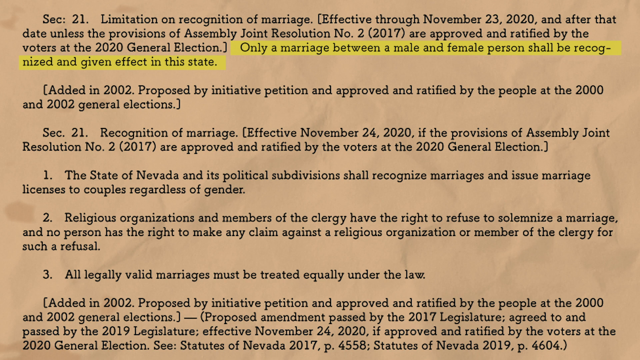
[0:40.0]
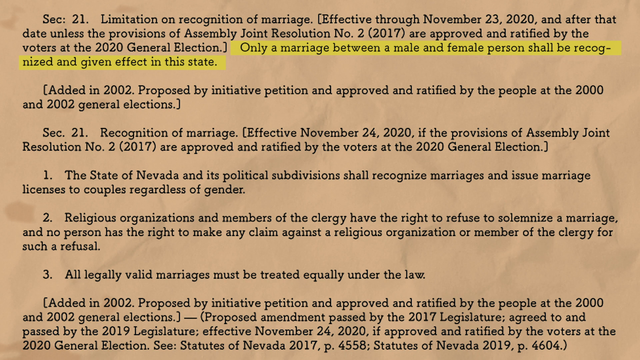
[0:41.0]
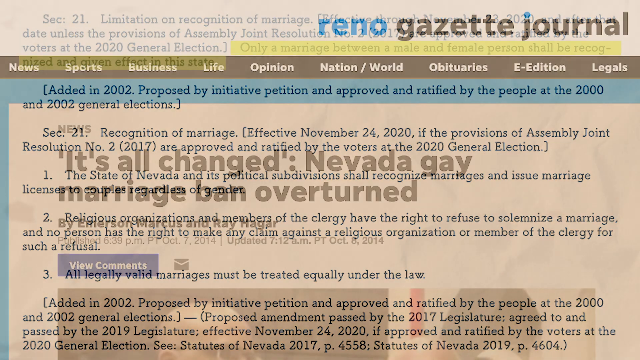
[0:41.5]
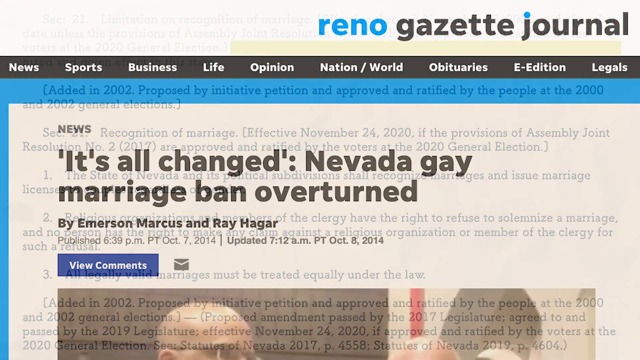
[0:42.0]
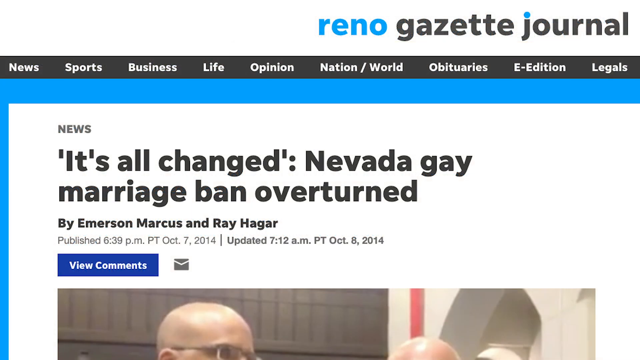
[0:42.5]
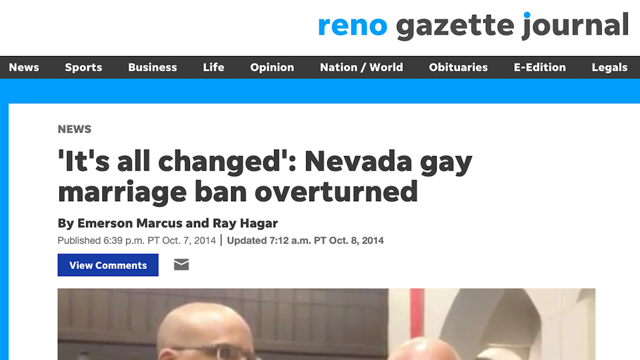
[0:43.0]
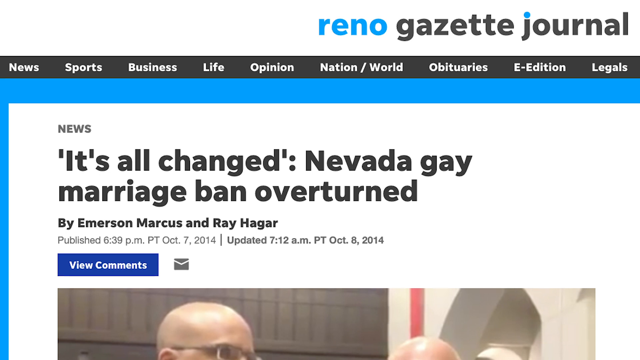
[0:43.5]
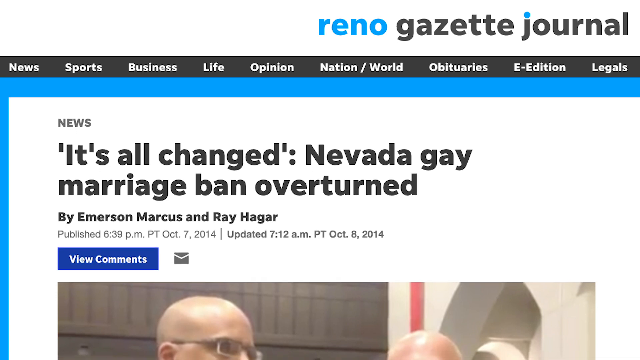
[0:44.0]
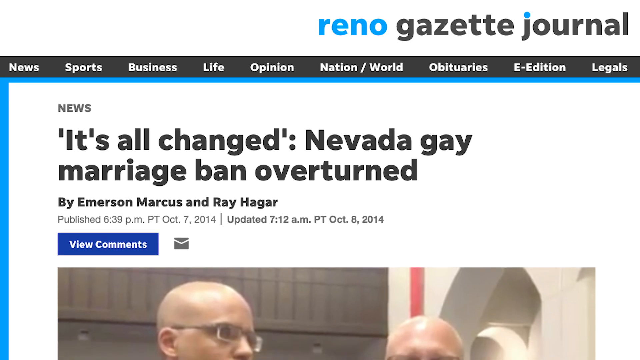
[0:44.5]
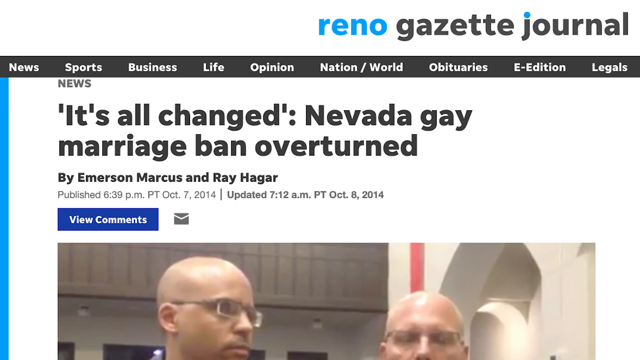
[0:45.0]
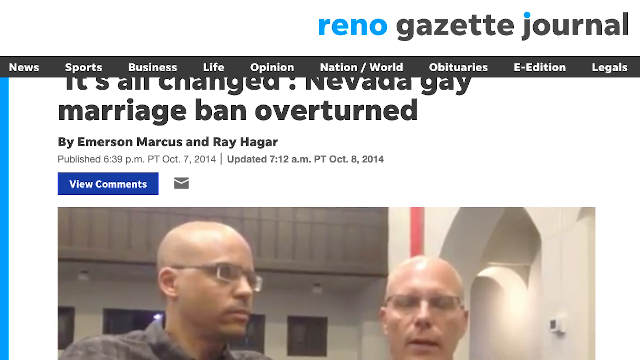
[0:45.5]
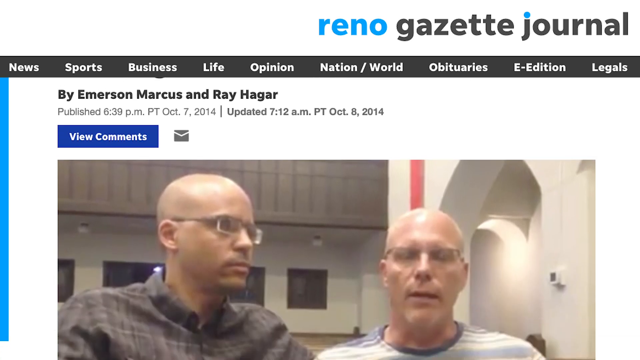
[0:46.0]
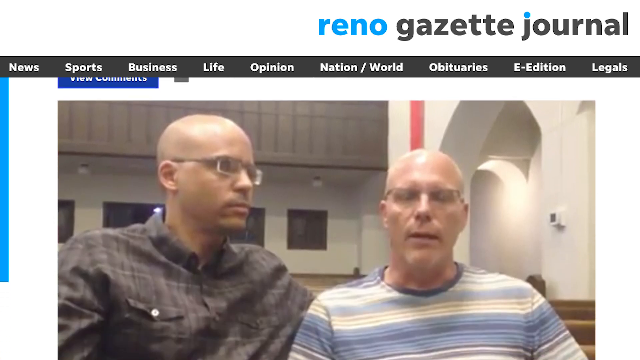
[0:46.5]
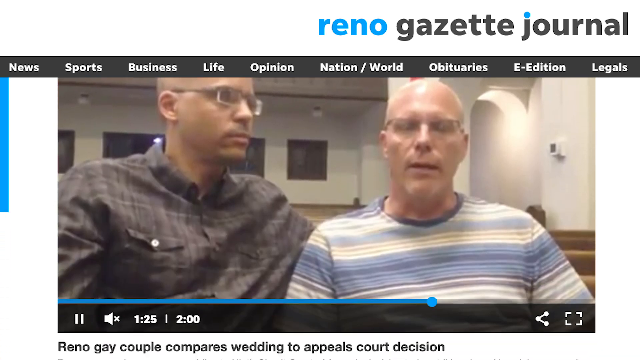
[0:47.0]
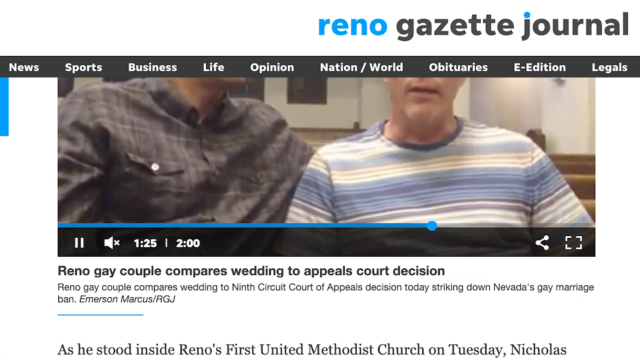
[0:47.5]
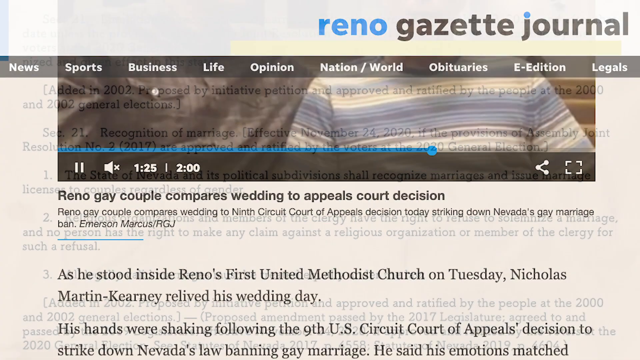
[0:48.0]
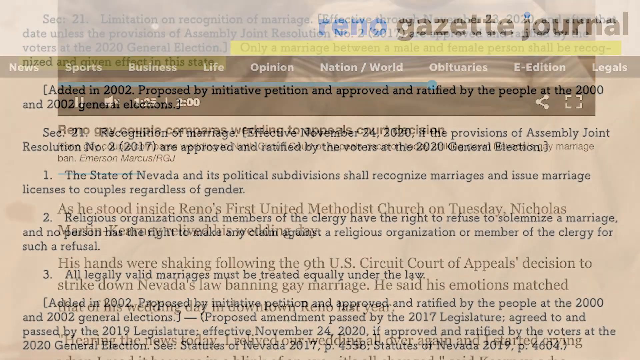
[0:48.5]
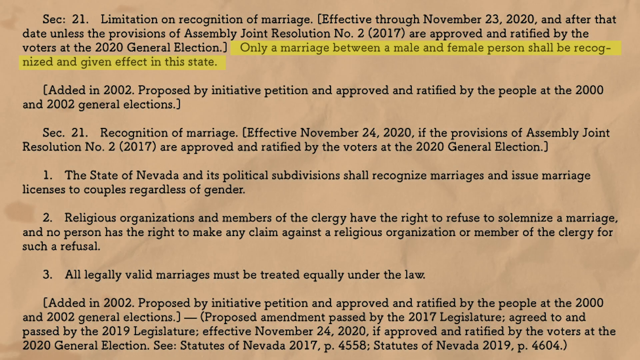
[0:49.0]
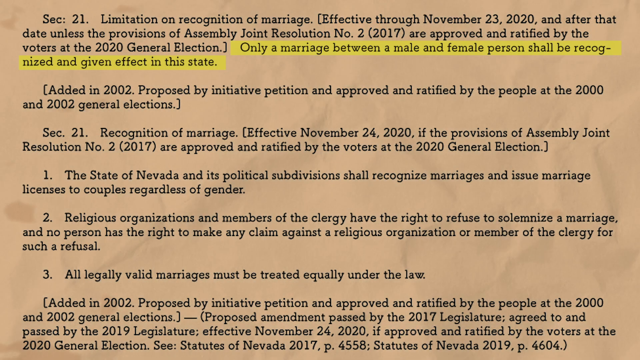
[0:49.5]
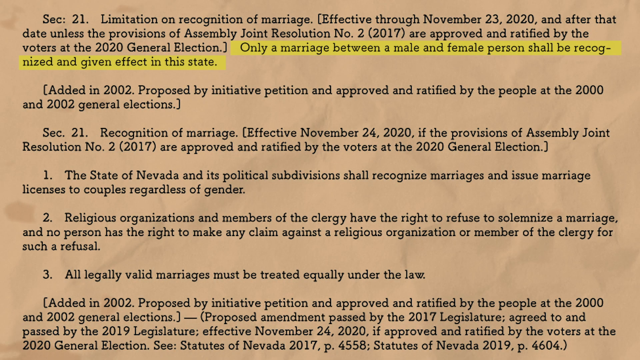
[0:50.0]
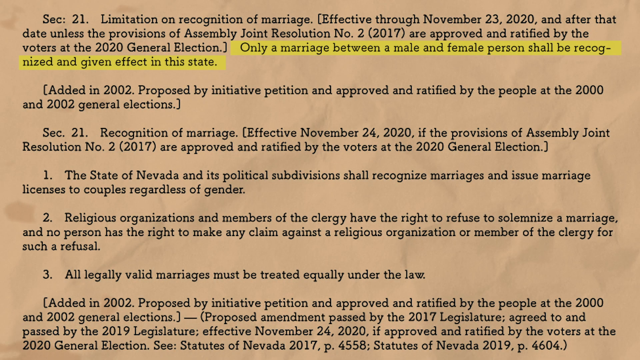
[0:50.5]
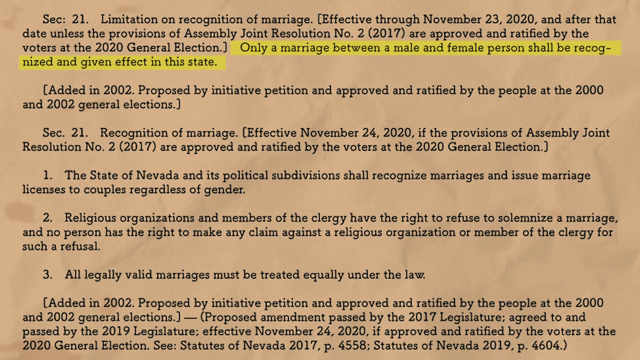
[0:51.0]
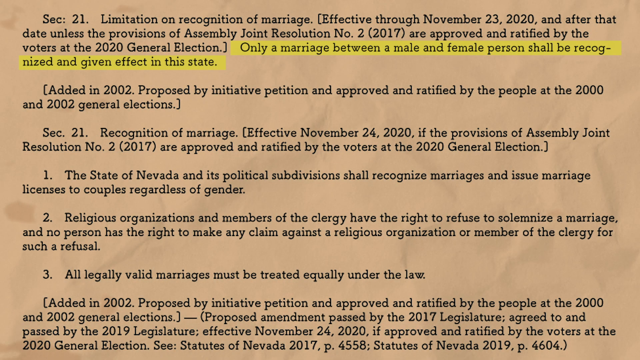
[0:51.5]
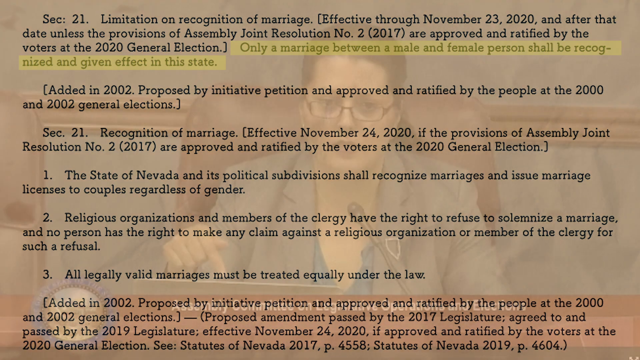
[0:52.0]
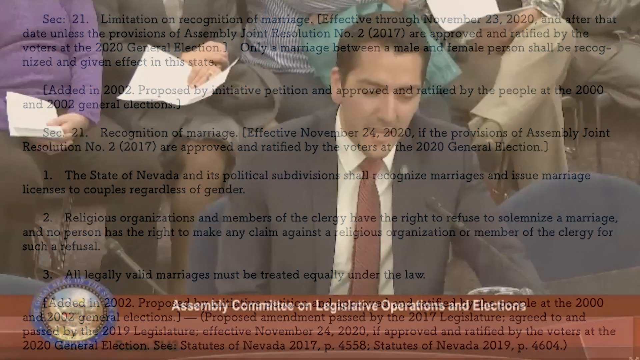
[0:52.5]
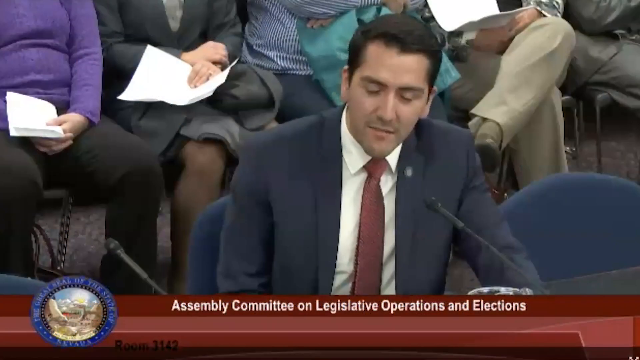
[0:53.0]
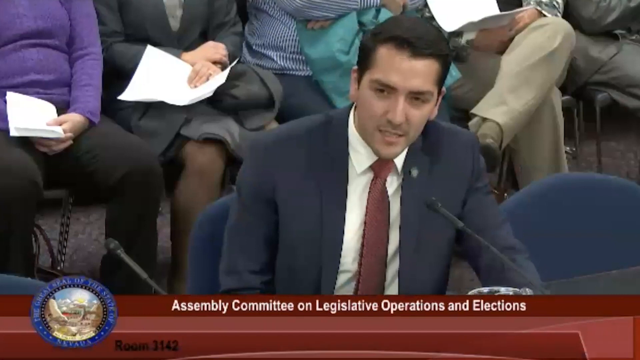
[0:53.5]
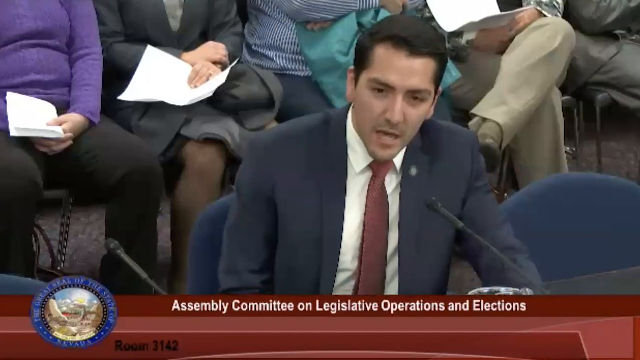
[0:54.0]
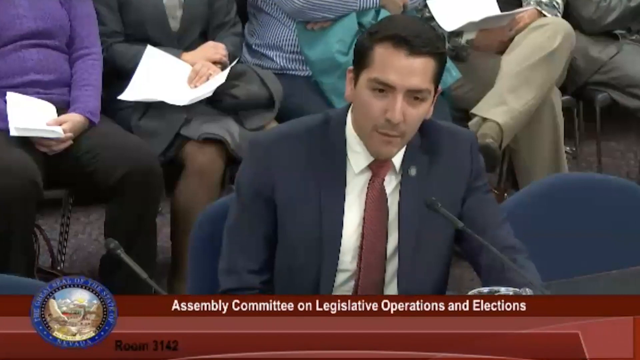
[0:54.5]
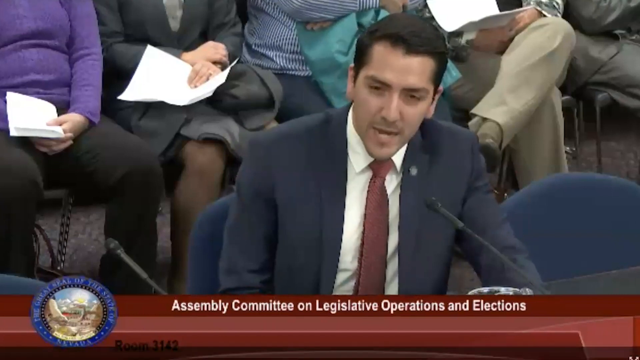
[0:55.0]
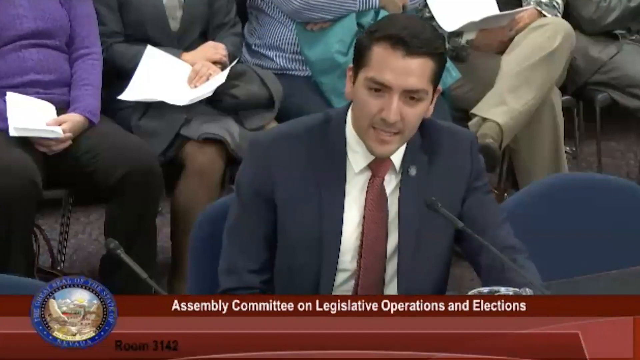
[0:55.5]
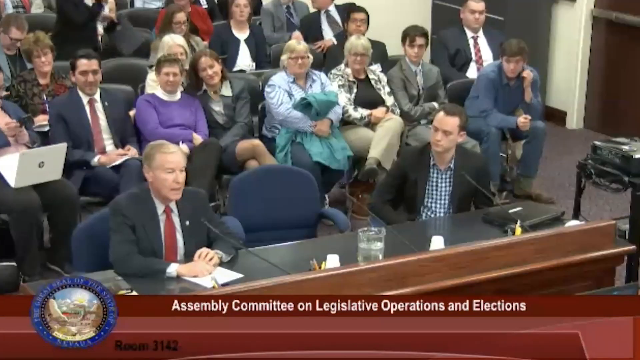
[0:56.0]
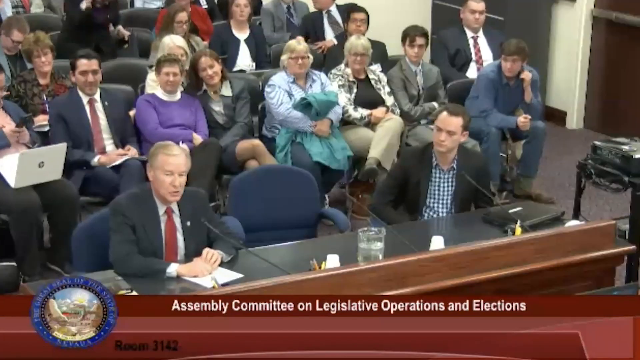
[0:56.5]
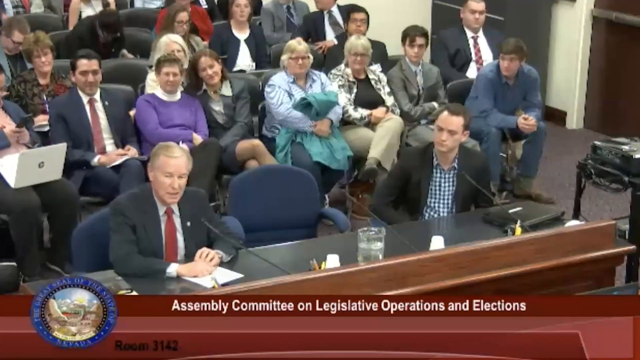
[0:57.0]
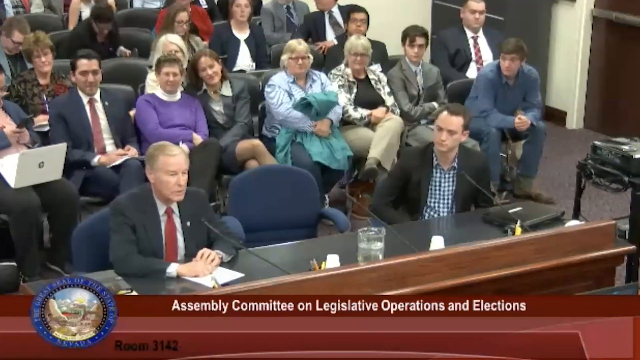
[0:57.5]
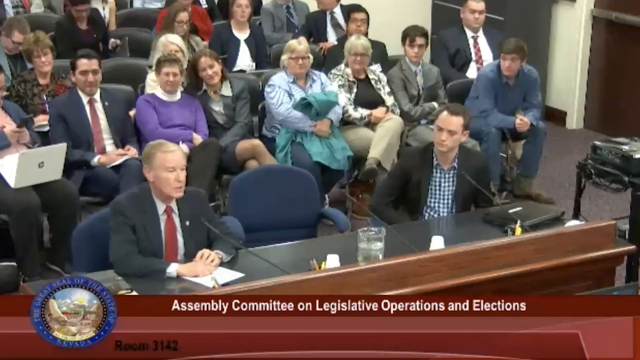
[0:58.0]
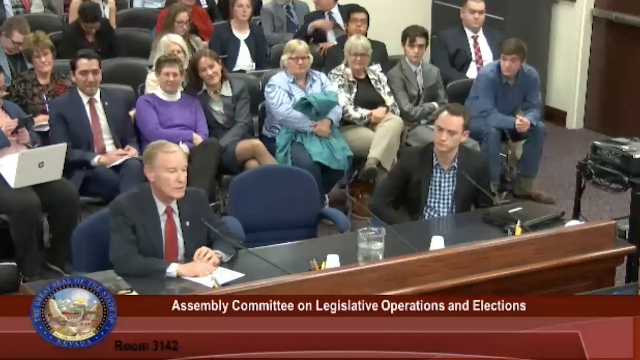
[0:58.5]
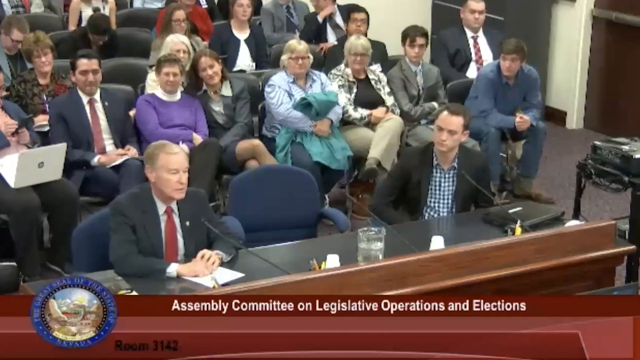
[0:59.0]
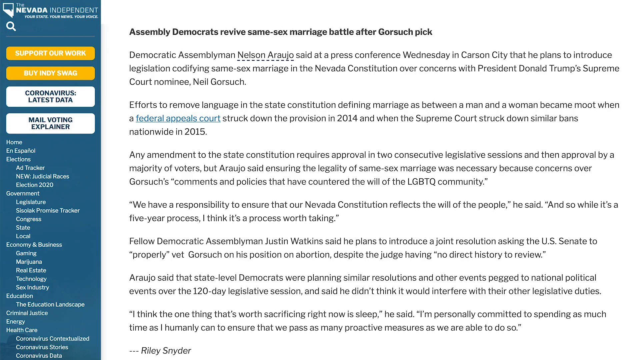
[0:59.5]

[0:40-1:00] Parts of the document are highlighted, including a part of section 21 stating "only a marriage between a male and a female shall be recognized and given effect in this state." Next, an article by the Reno Gazette Journal is shown, with the text "news," "it's all changed," and "Nevada gay marriage ban overturned," stating that Nevada had banned same-sex marriage. Below that is an image of two men, both wearing spectacles, sitting in what appears to be a court. The caption below the image begins "Reno gay couple," and text below it ends "decision today striking down Nevada gay marriage ban."